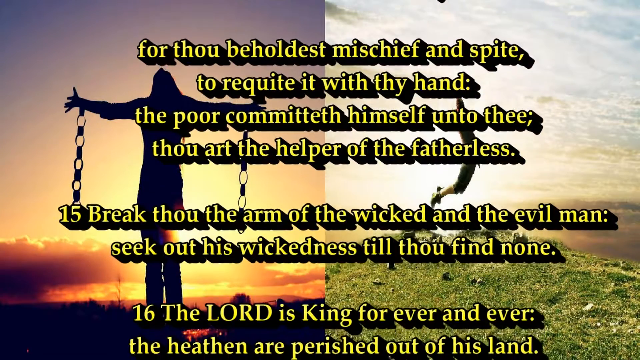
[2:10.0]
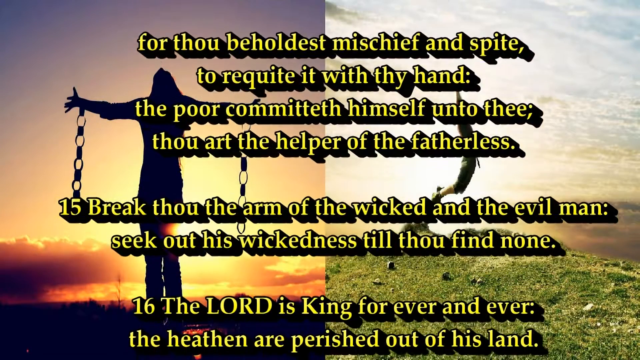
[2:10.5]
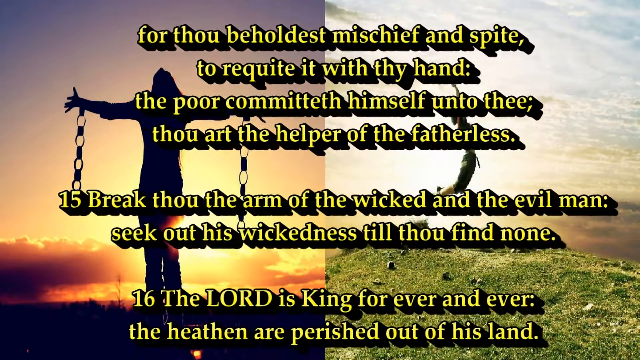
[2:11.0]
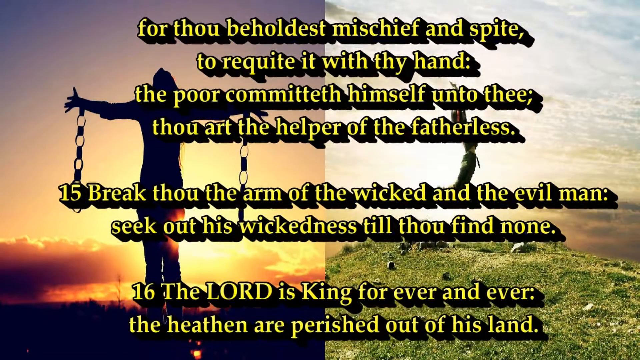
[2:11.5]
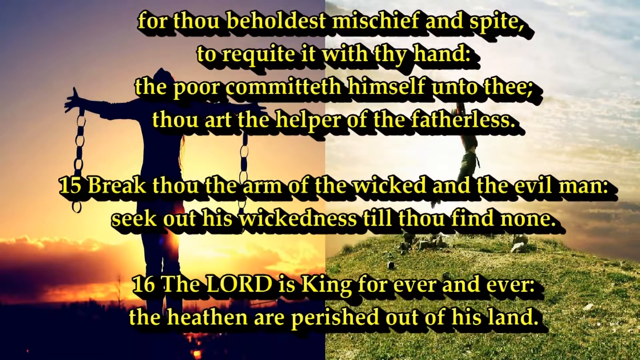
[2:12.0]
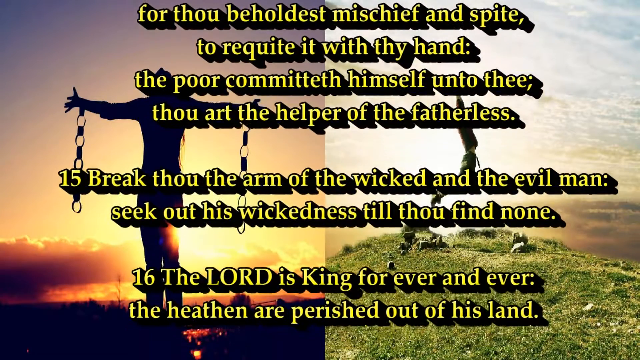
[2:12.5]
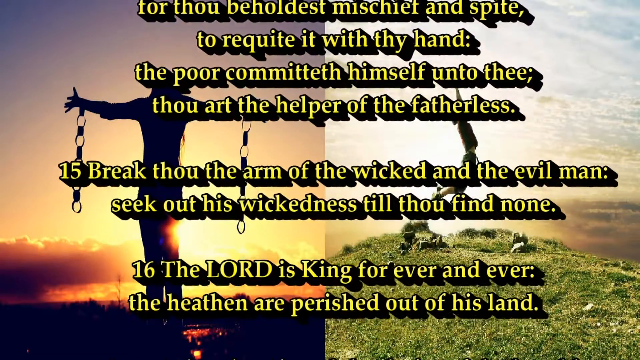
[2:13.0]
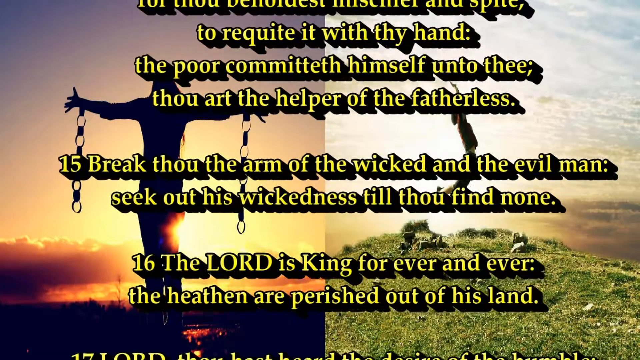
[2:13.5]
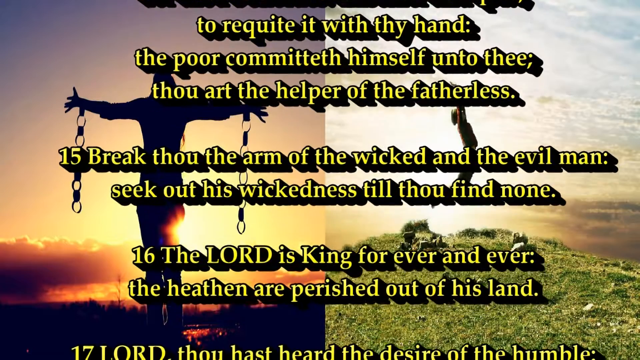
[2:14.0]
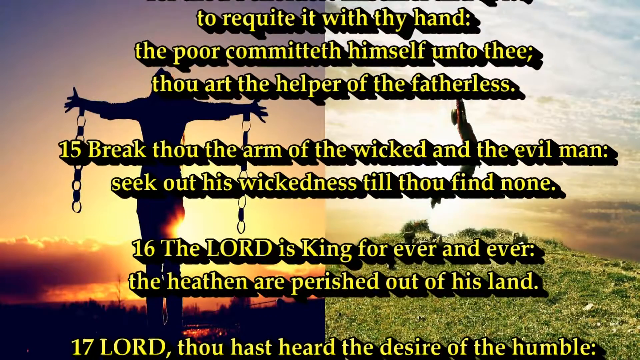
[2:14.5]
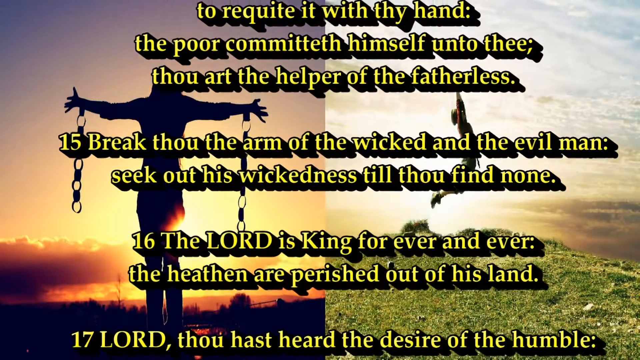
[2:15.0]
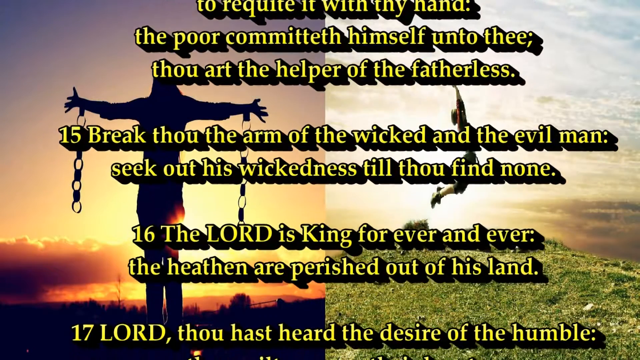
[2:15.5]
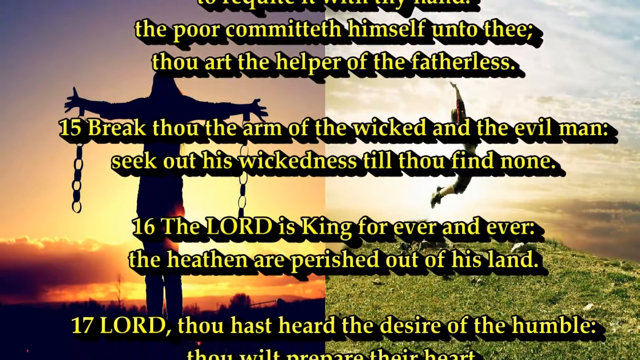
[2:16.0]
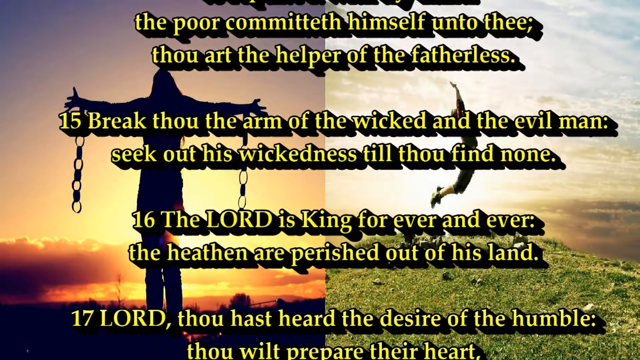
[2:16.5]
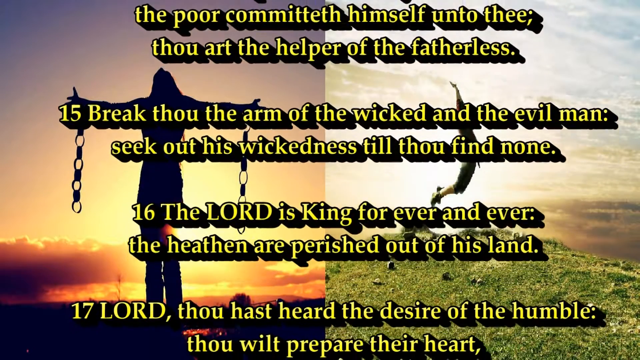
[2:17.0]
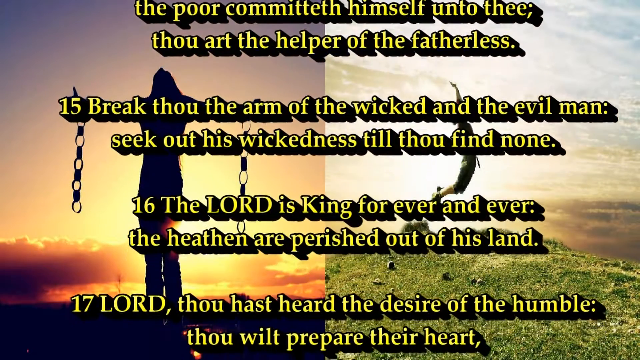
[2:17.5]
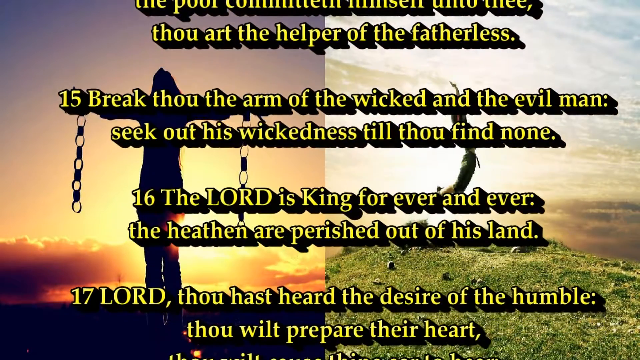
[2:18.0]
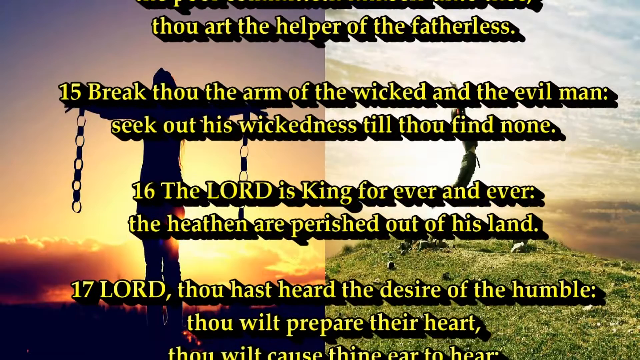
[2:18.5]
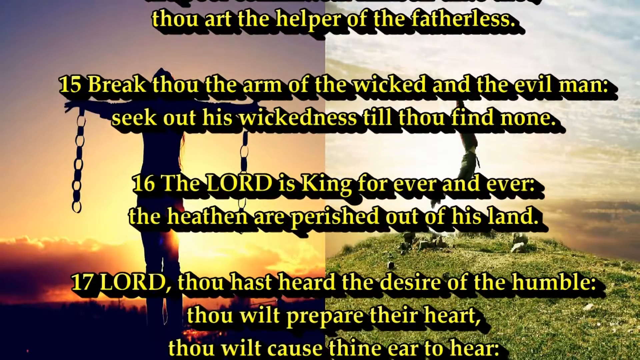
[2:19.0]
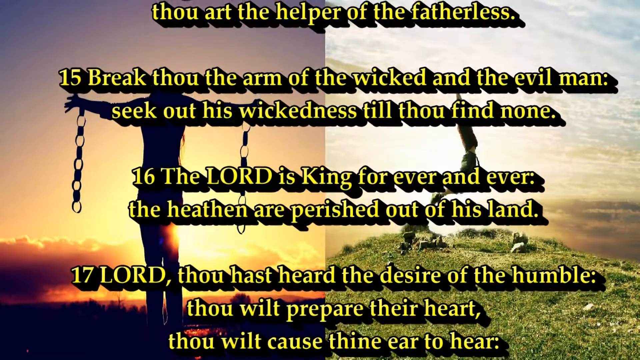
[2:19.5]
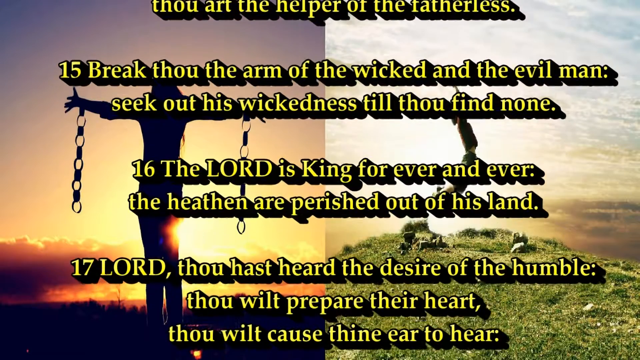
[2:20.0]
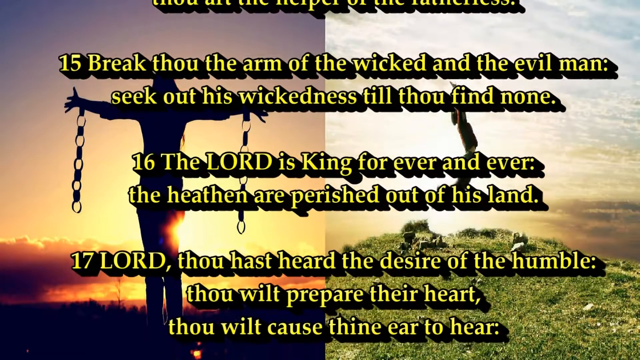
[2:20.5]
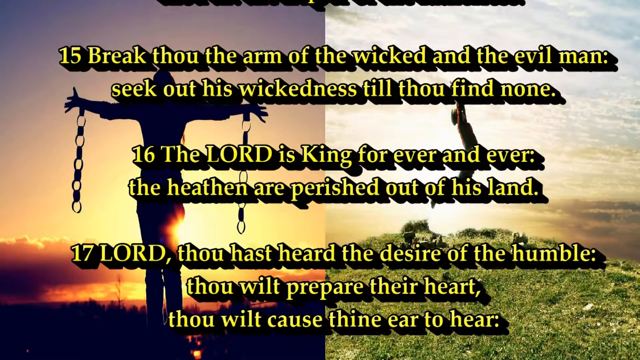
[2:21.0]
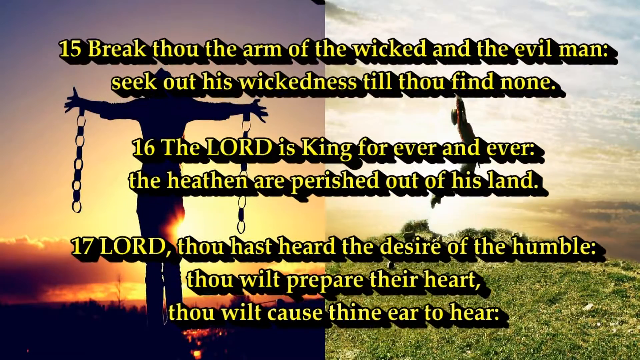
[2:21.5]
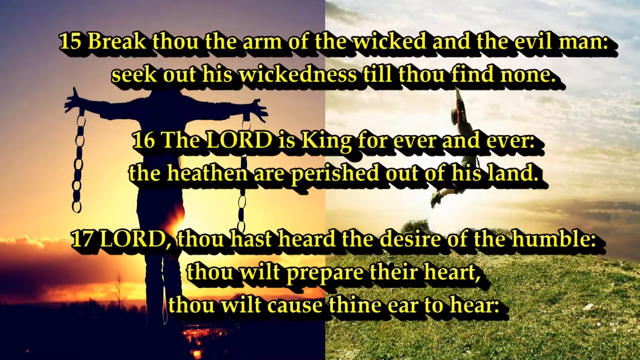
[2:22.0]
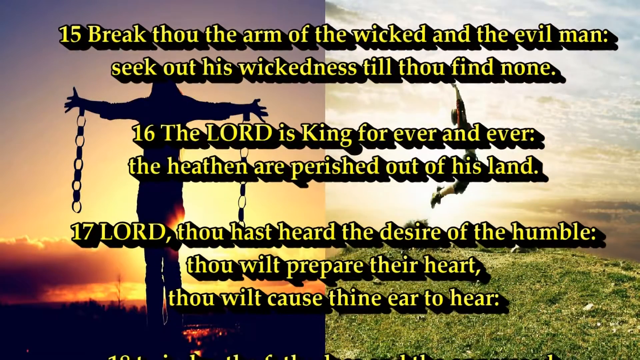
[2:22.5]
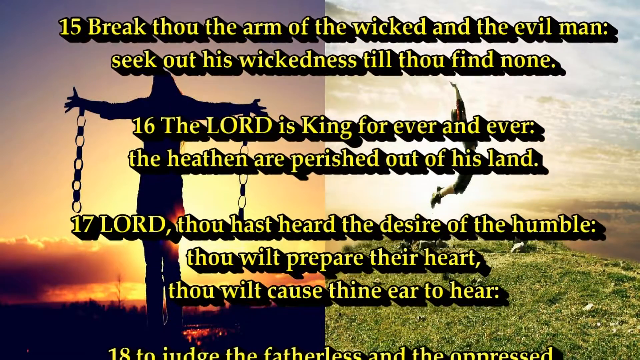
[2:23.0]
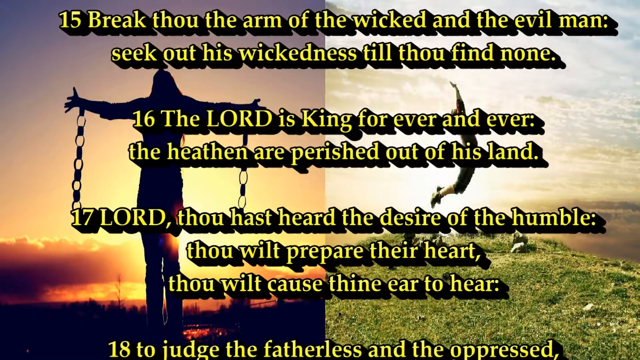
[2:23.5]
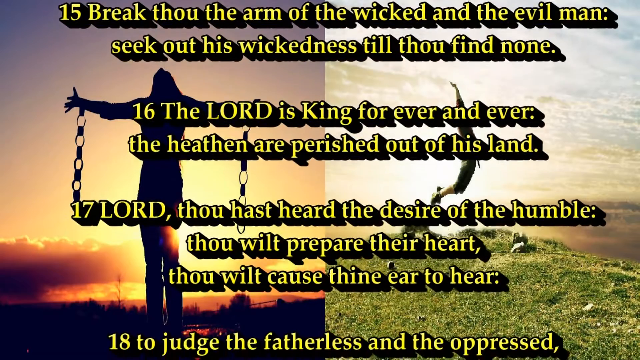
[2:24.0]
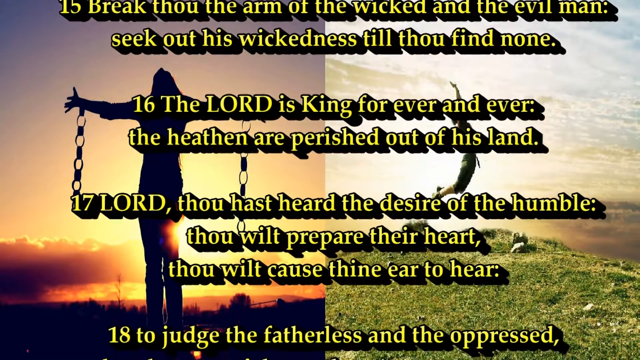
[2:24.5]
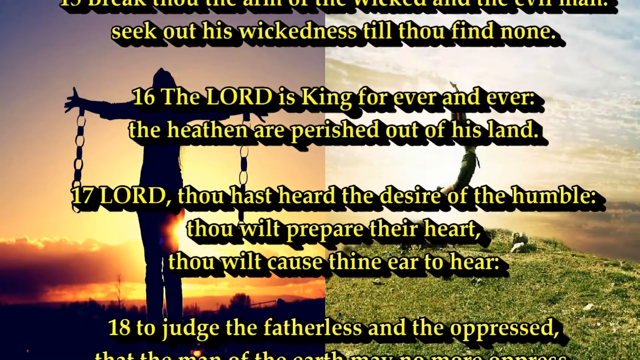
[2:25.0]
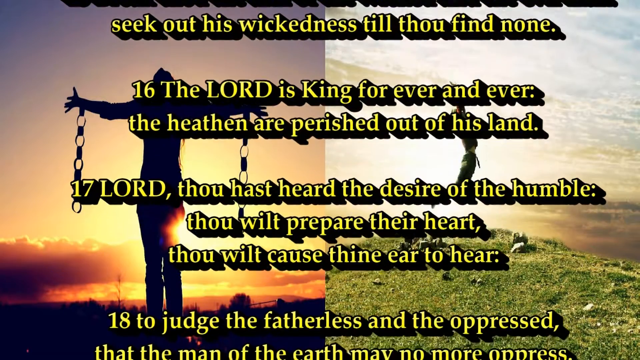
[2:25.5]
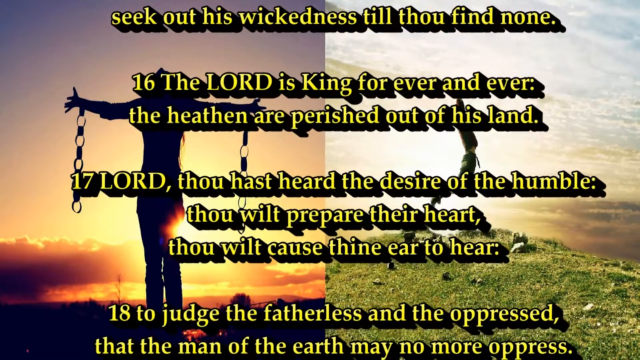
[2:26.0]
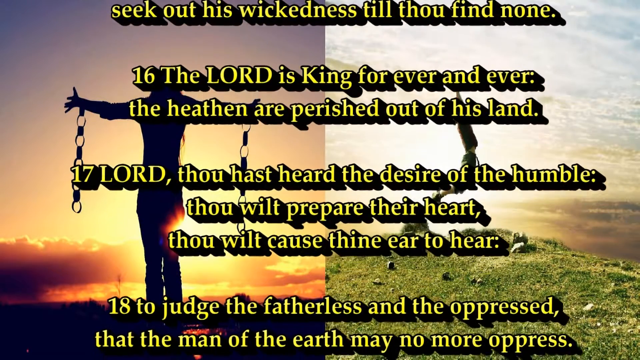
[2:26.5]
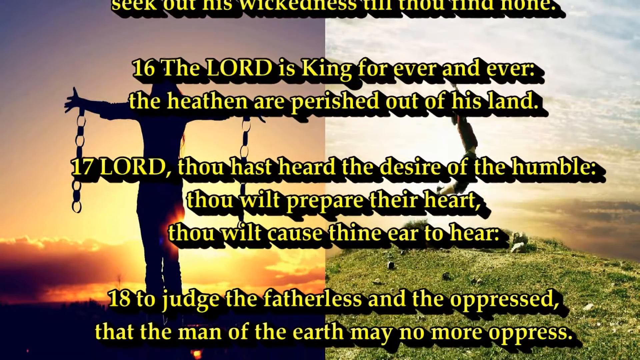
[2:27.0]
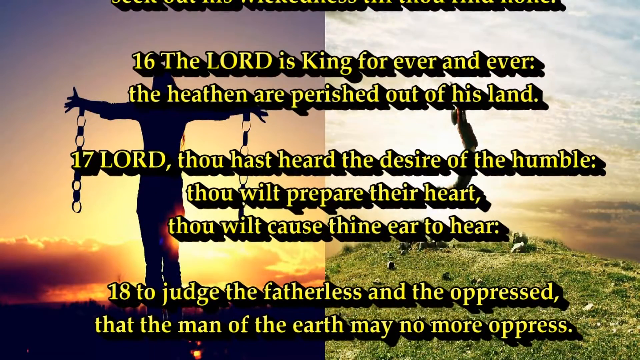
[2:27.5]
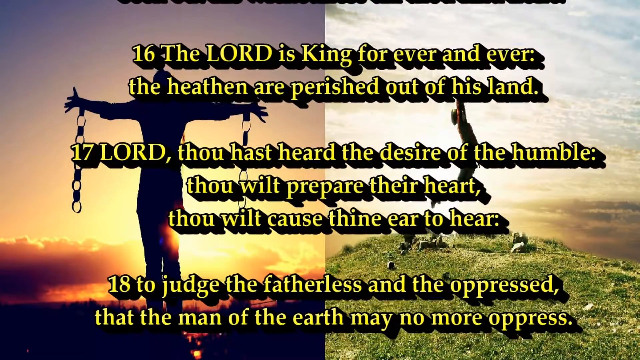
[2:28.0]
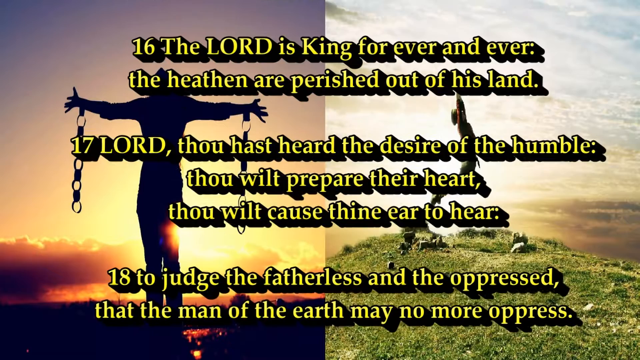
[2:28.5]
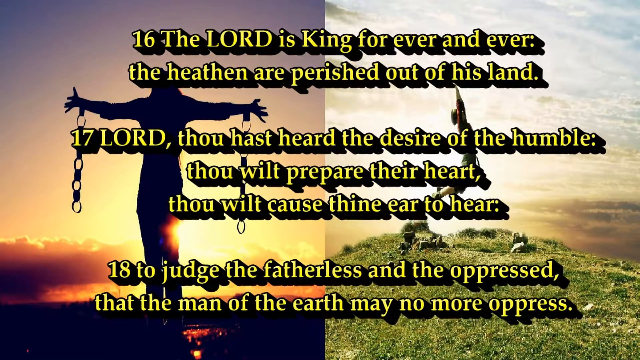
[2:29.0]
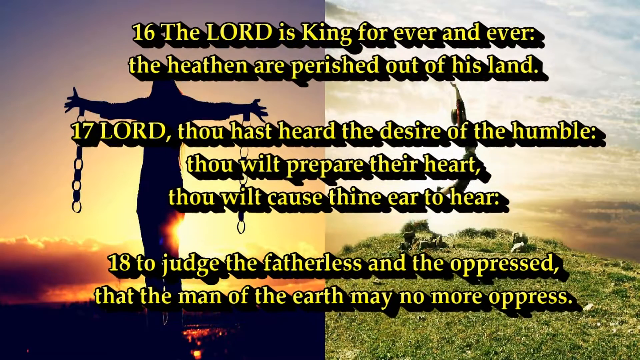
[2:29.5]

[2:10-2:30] The text runs from verse 14 to verse 18 of the psalm, with a black background and two pictures behind the text. Both pictures seem to have more pictures on them. In one, a man who seems very tall is standing, and it seems to be sunset. The other picture seems to show a man jumping while standing on a field of green grass, where it also seems to be sunset. Verse 15 reads "break through the arm of the wicked and the evil man seek out his wickedness," followed by verse 16.